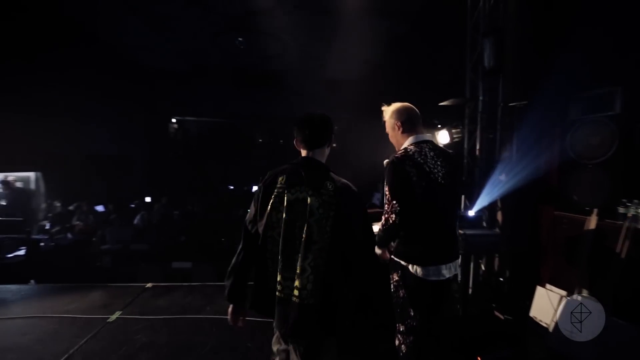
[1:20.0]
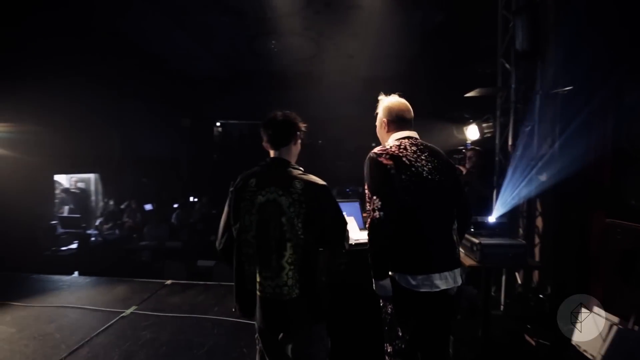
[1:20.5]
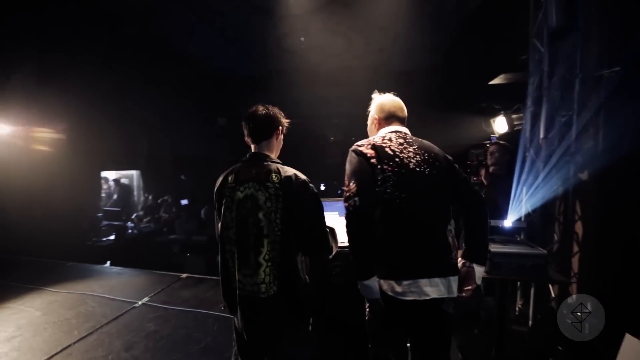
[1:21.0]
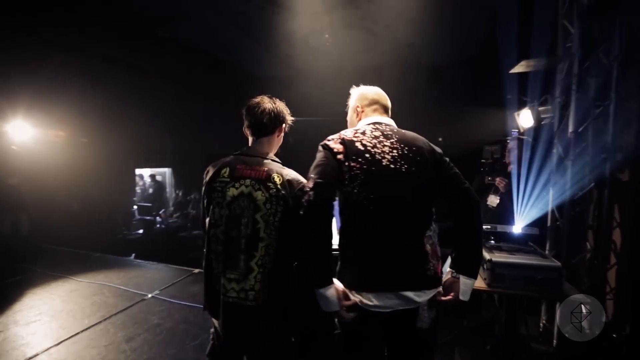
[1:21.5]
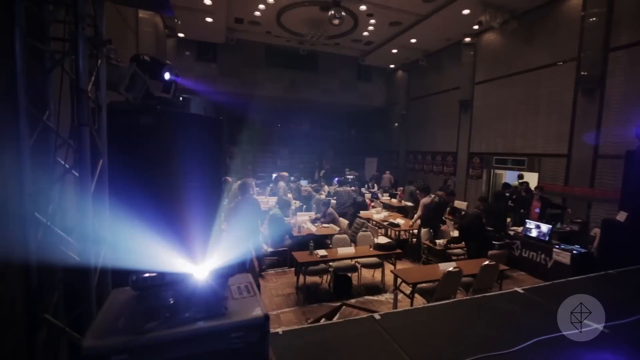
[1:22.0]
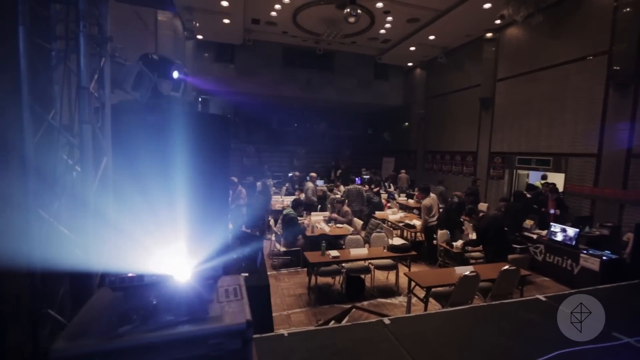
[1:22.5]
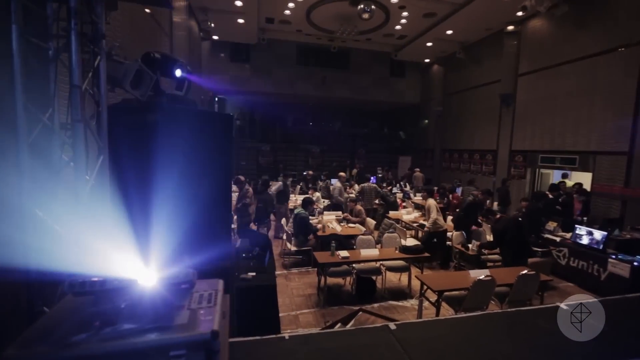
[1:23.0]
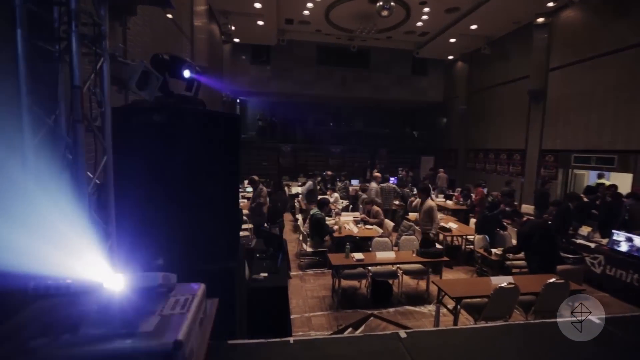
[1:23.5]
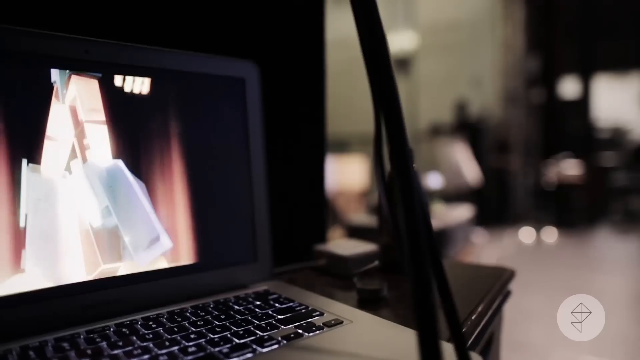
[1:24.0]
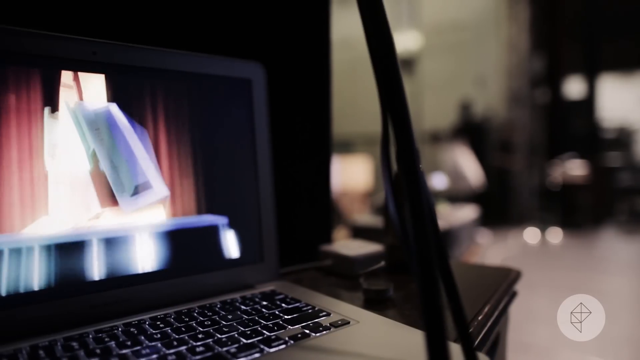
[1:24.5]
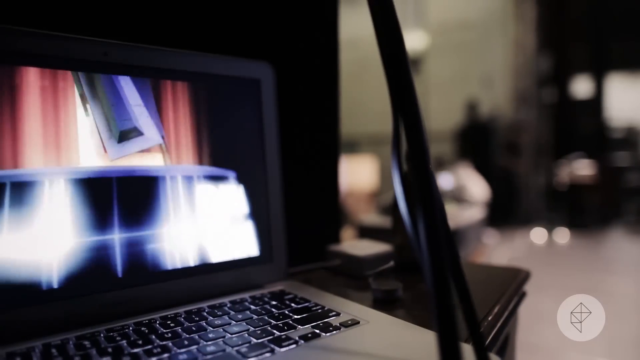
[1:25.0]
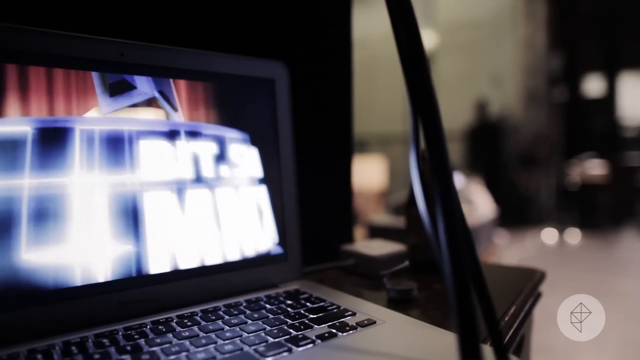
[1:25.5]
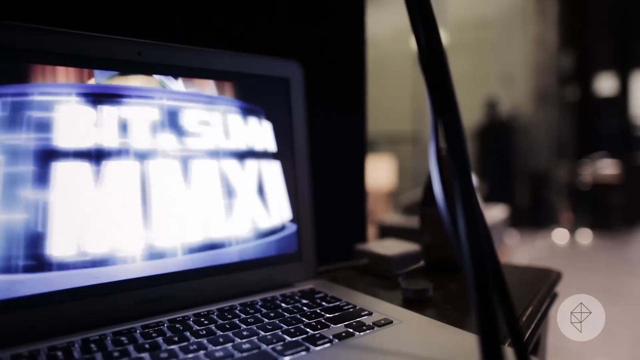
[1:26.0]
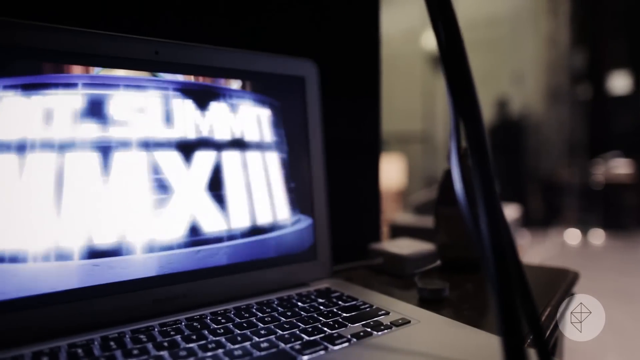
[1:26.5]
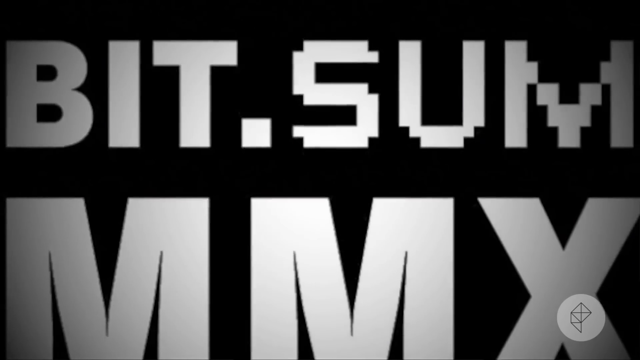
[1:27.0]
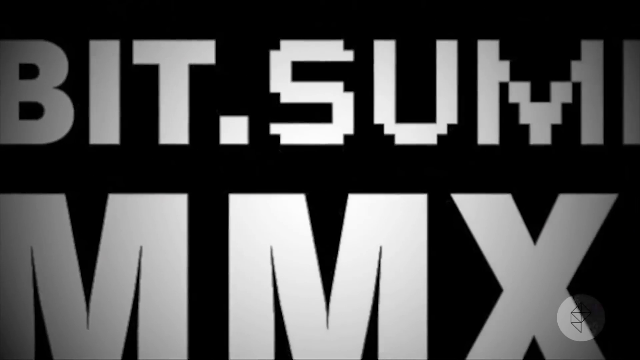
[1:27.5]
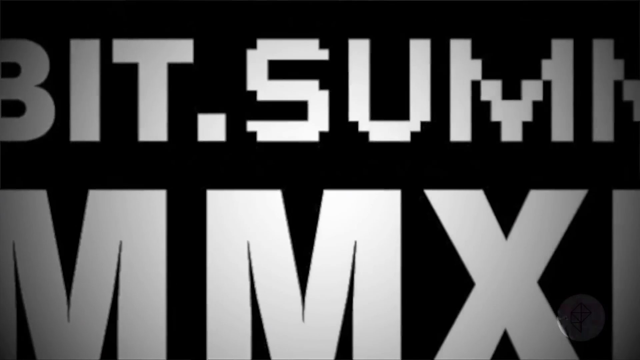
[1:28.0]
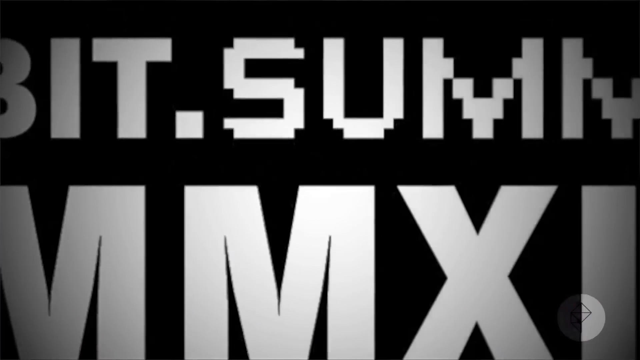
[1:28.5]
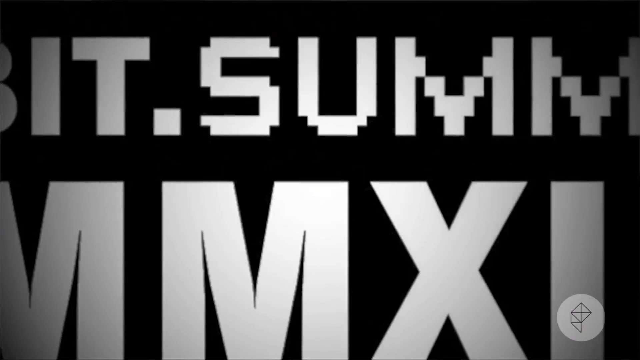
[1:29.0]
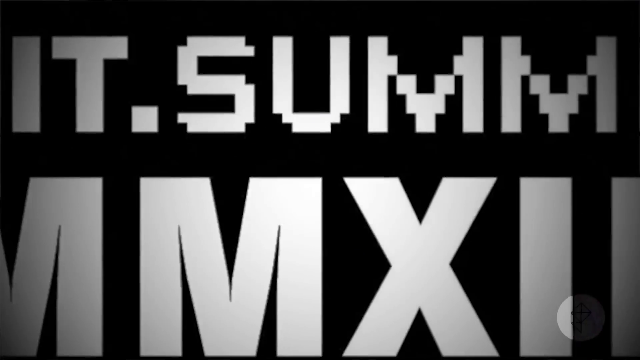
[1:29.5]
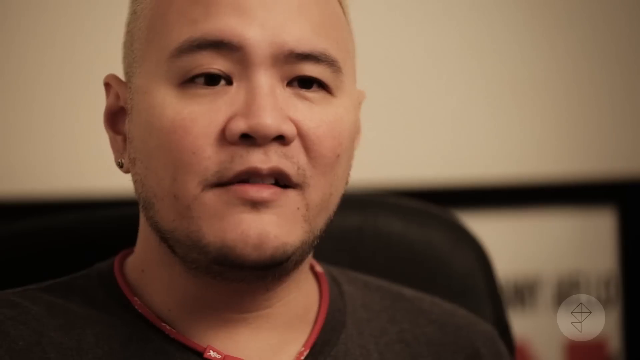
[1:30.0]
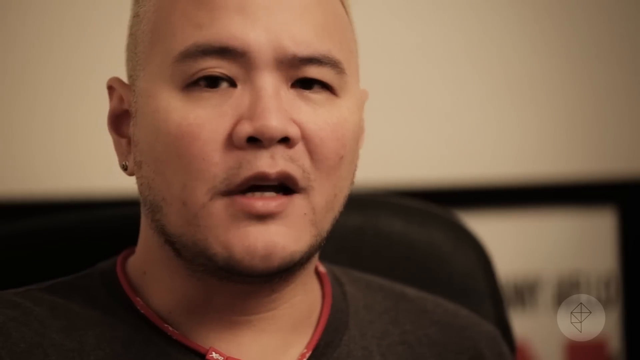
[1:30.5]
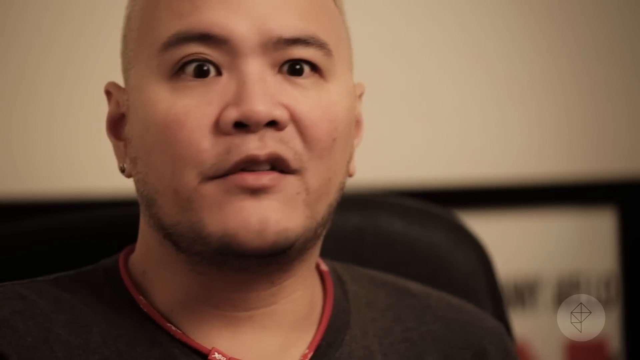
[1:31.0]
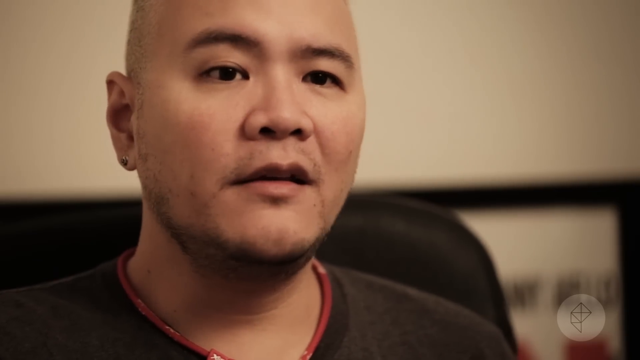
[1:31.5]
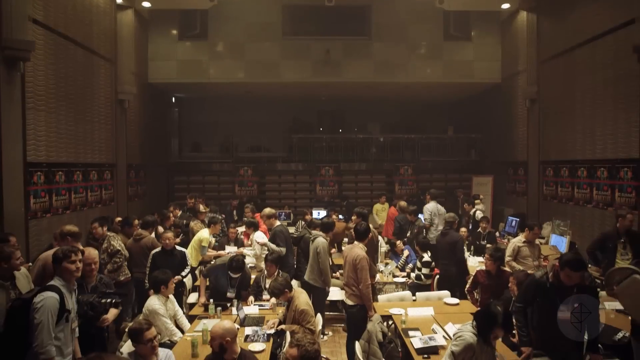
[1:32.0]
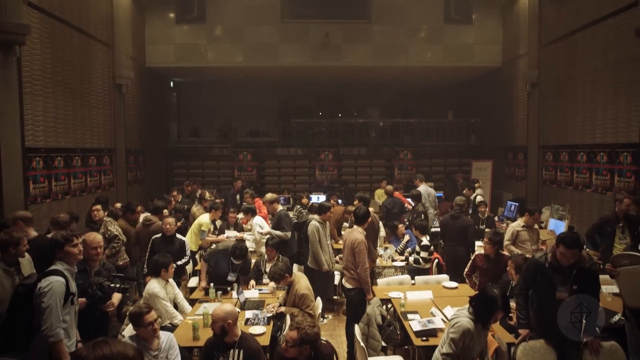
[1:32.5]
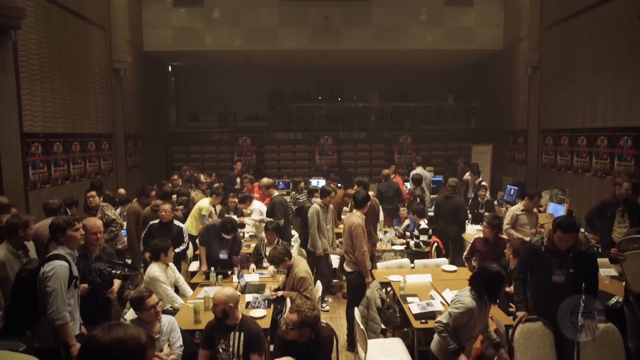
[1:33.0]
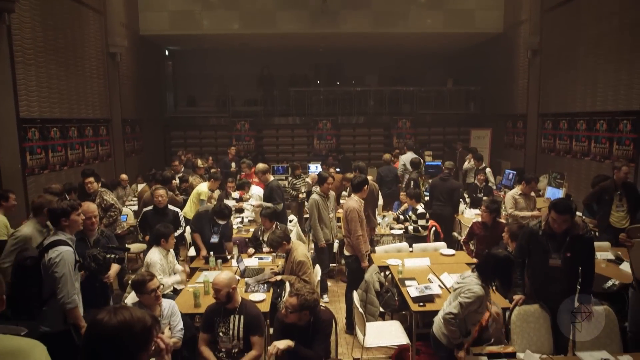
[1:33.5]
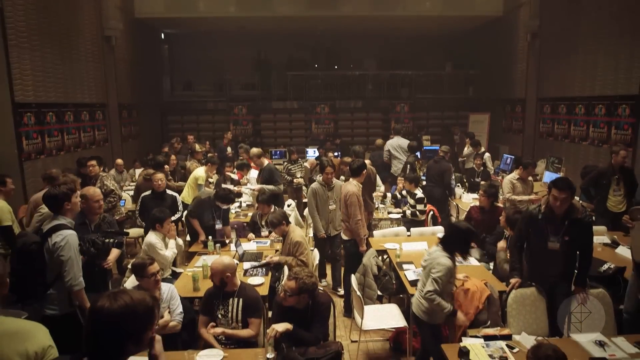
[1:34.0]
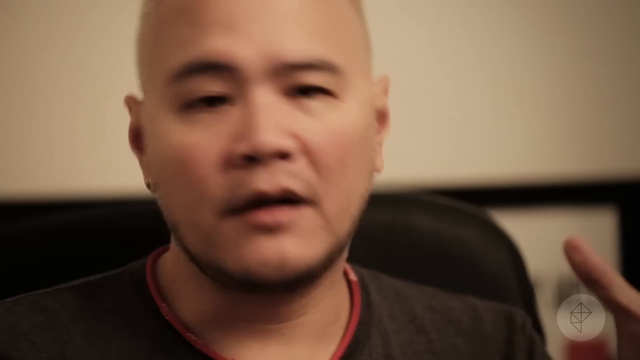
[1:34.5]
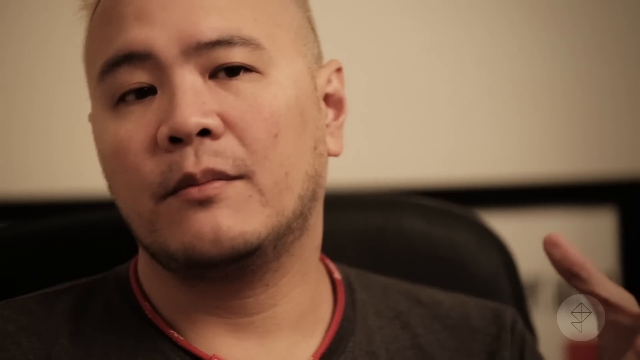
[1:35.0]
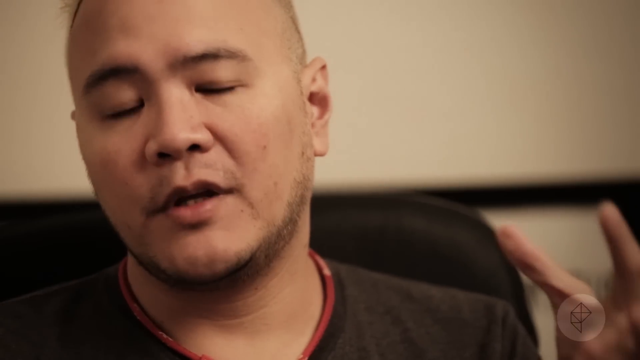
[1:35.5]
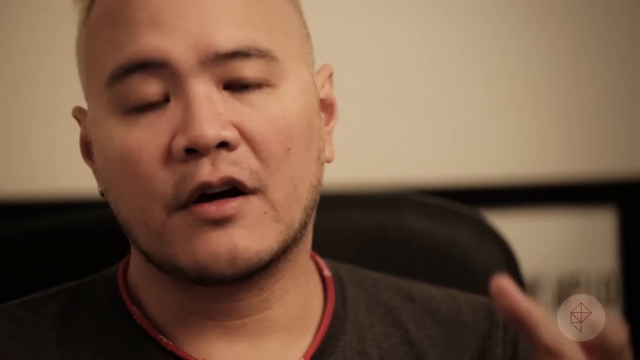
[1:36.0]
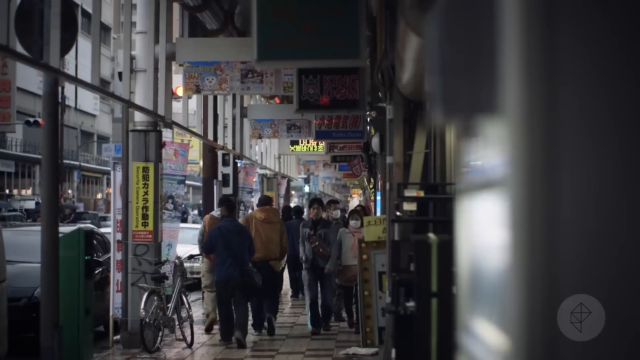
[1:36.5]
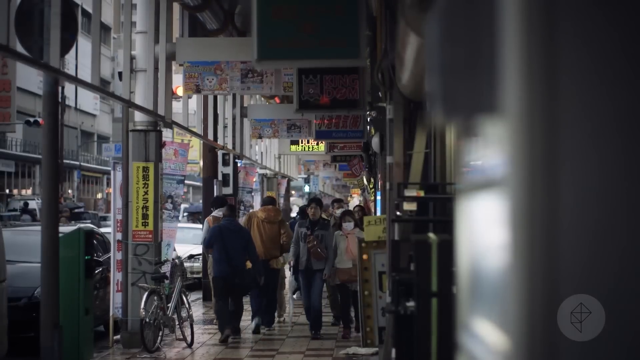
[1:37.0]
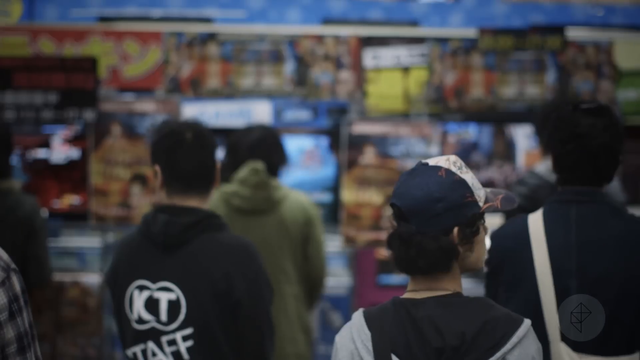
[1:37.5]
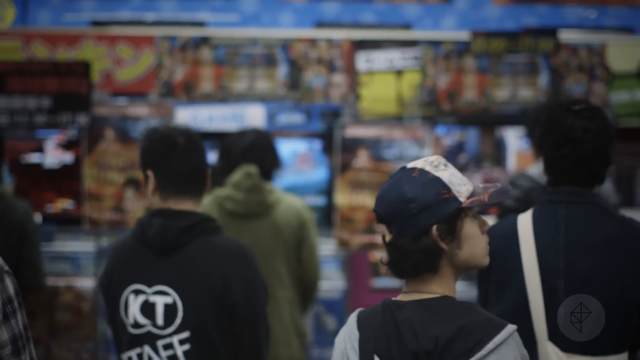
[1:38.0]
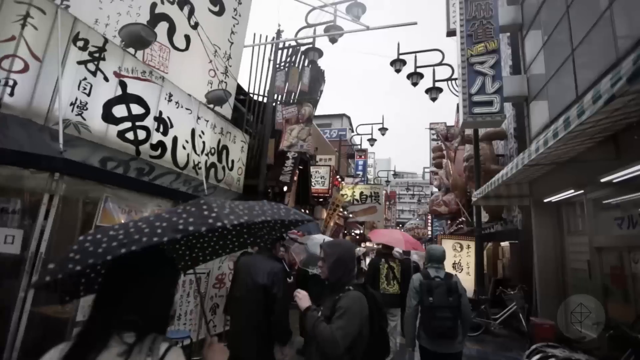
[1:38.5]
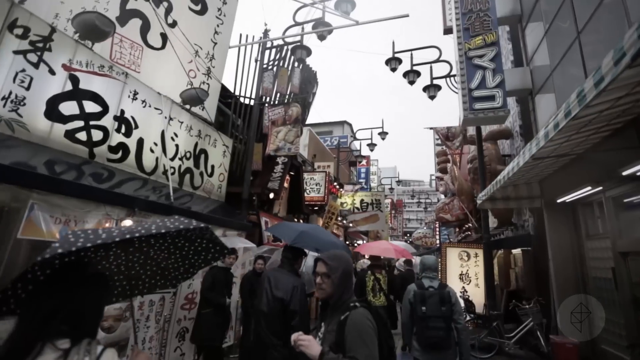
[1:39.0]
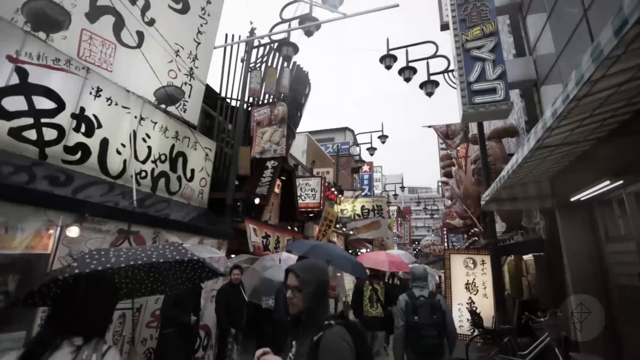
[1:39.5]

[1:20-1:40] The view is on the stage of what looks to be an auditorium, or maybe a warehouse, dimly lit. Another shot shows the auditorium very crowded, with many tables and people at them; it is dimly lit but with lots of lights shining everywhere, projector lights to the left, and at the bottom right a table that says "Unity," a game engine. A laptop plays an animation of what looks to be a trophy of some sort. The video cuts to a man of Asian descent speaking to the camera; his hair is short and looks blonde, and the camera is angled so mostly only his face is visible. More footage shows the auditorium packed with people at tables, then the man speaking to the camera. The video then cuts to what looks to be an Asian city, maybe in Japan, with people walking; some people stand outside some sort of comic book store. Another shot shows people walking down a street with many Asian or Japanese-looking signs everywhere, some with umbrellas and hoodies; it looks kind of cold.